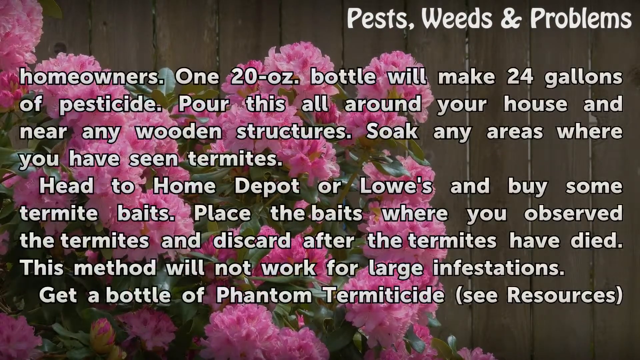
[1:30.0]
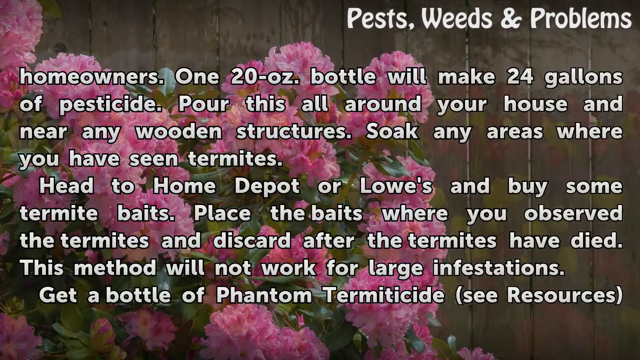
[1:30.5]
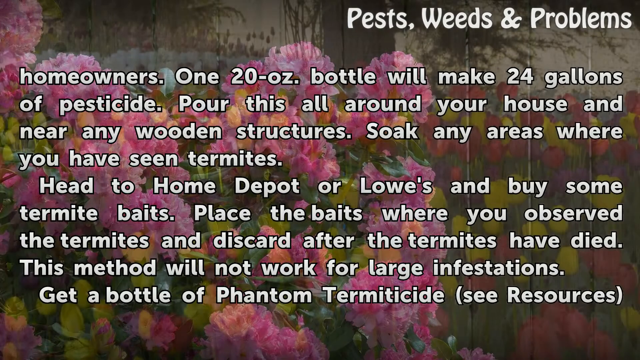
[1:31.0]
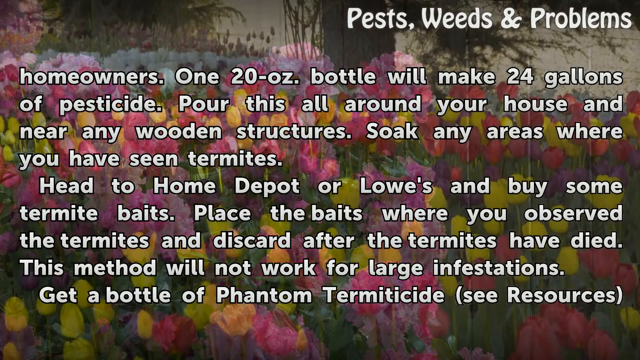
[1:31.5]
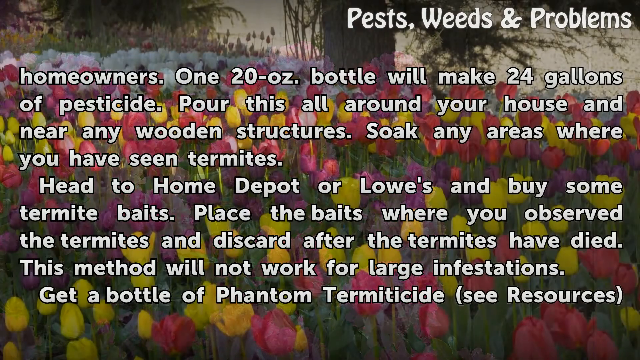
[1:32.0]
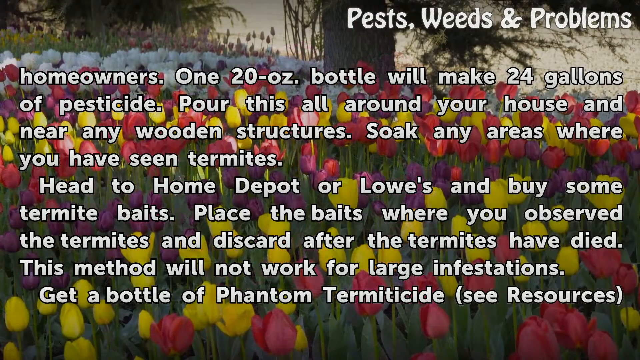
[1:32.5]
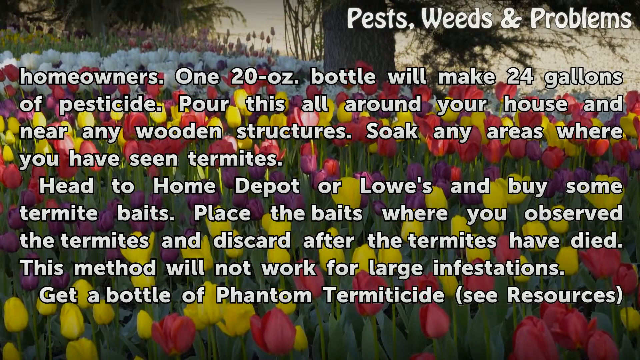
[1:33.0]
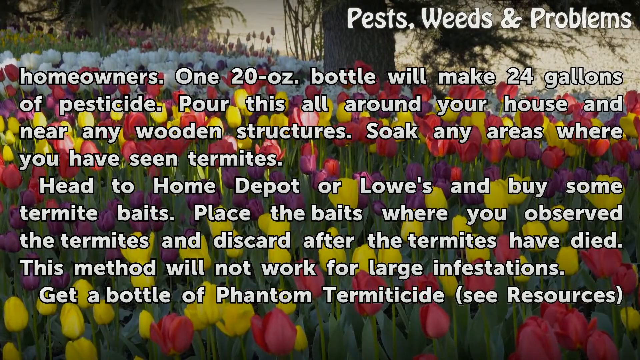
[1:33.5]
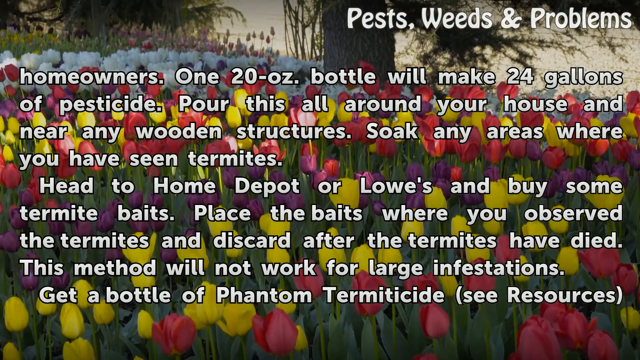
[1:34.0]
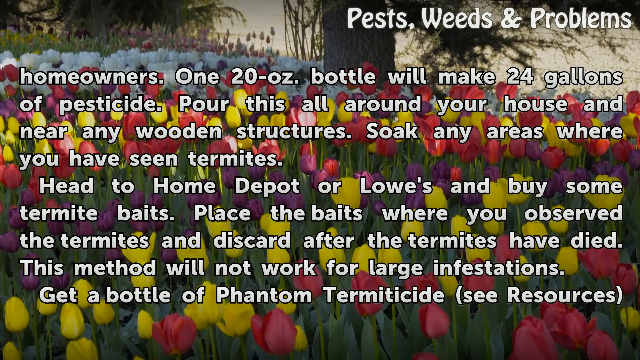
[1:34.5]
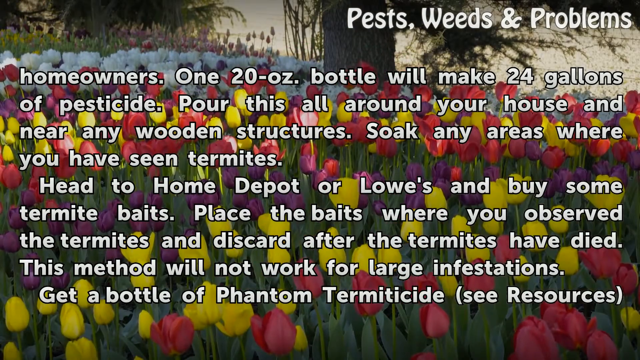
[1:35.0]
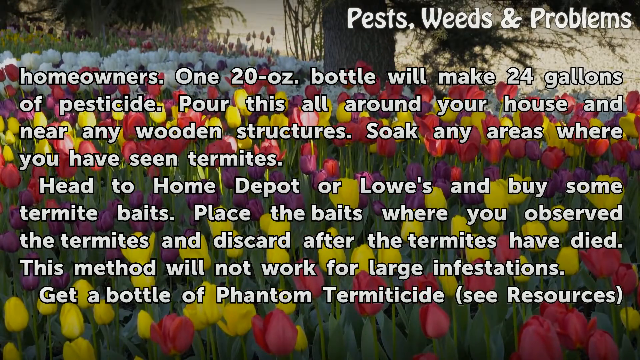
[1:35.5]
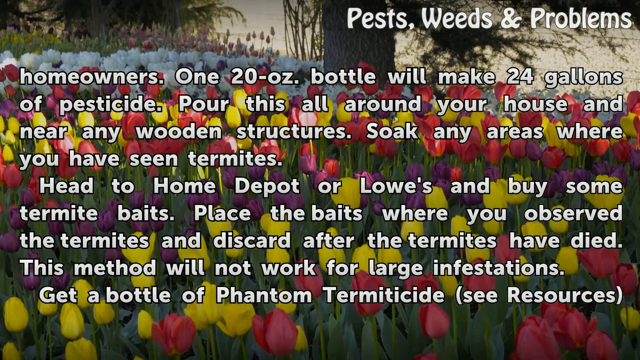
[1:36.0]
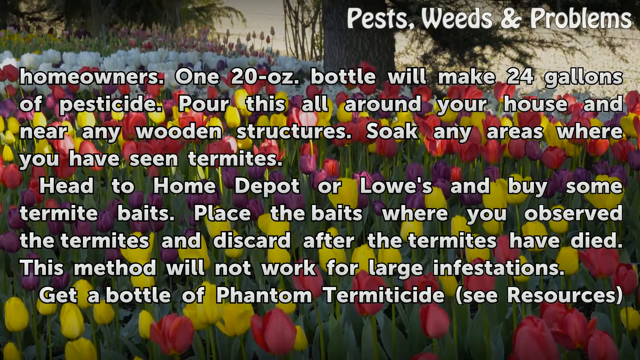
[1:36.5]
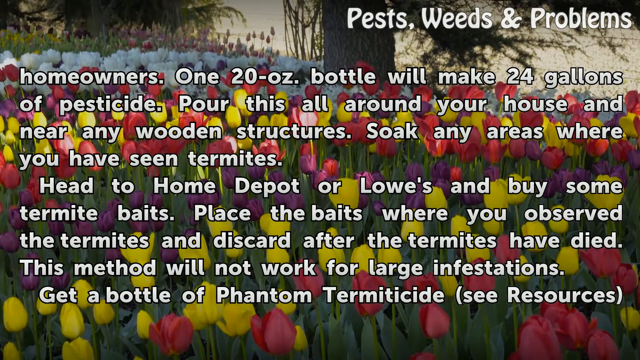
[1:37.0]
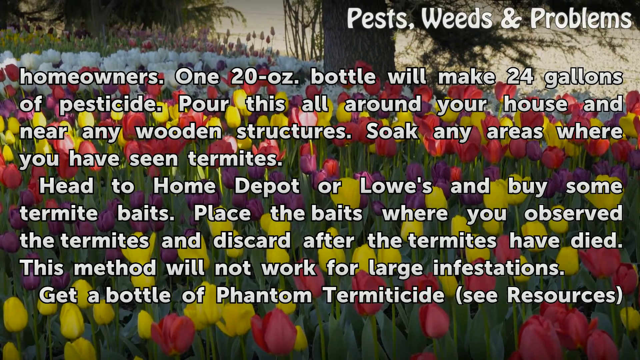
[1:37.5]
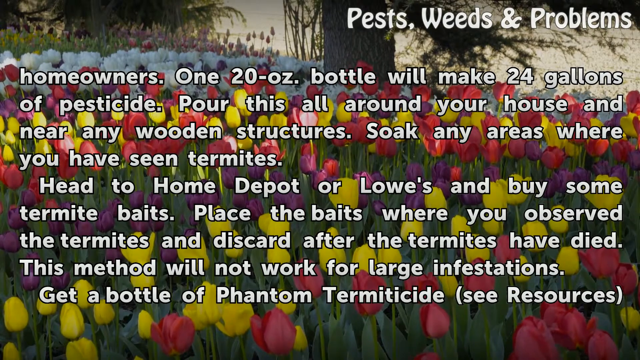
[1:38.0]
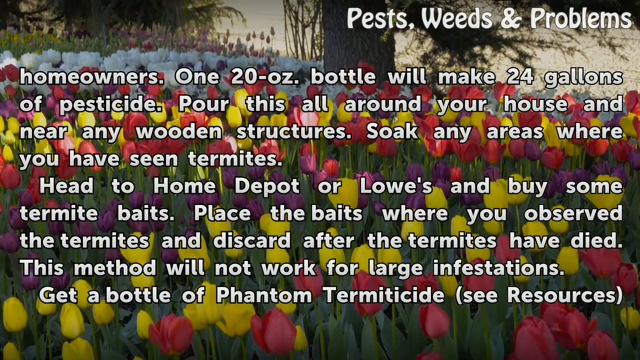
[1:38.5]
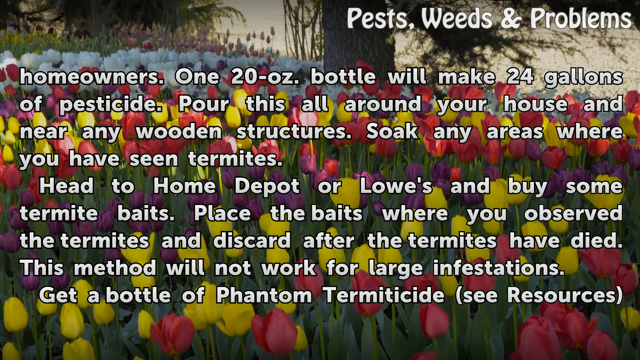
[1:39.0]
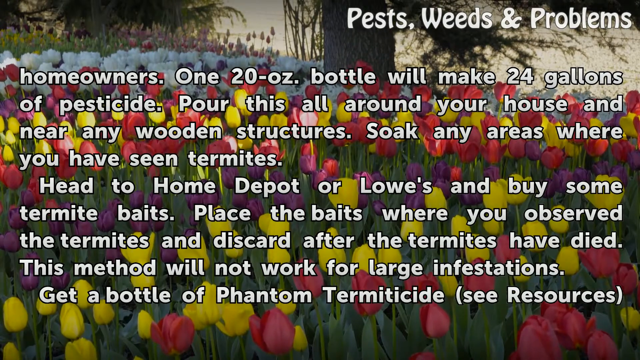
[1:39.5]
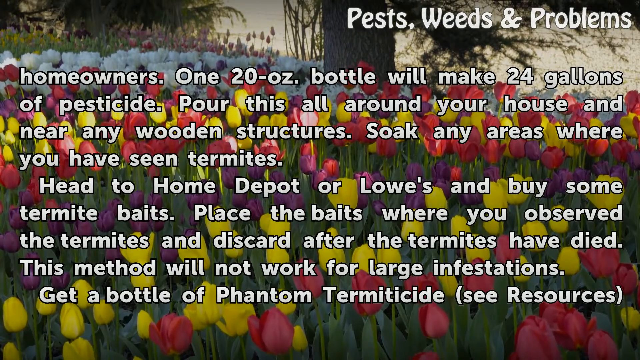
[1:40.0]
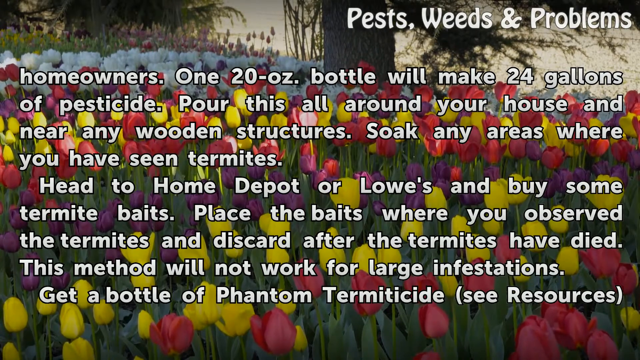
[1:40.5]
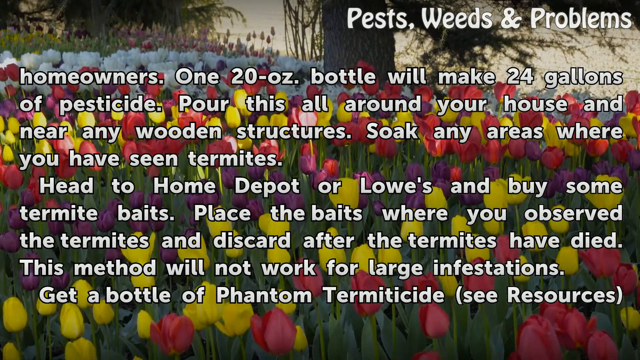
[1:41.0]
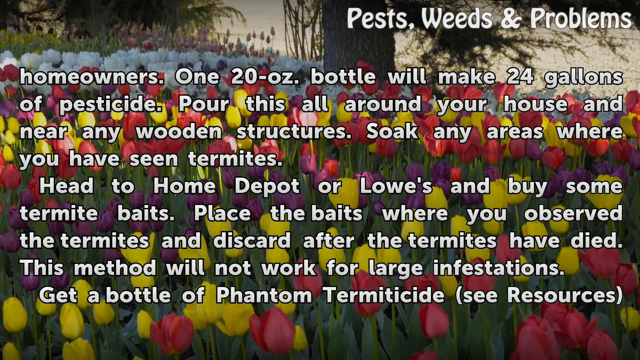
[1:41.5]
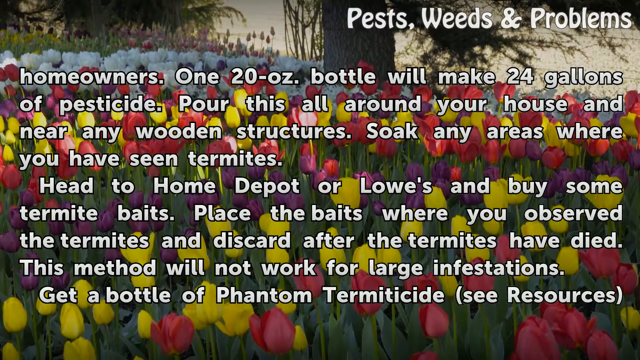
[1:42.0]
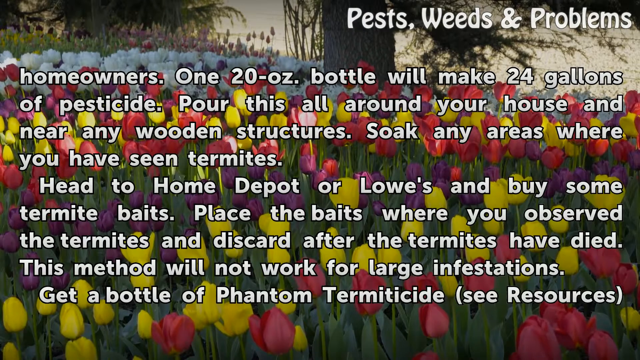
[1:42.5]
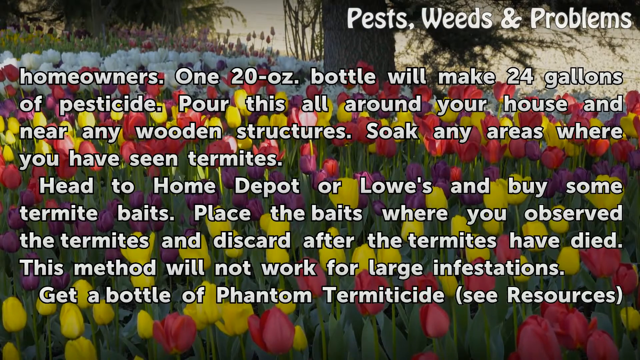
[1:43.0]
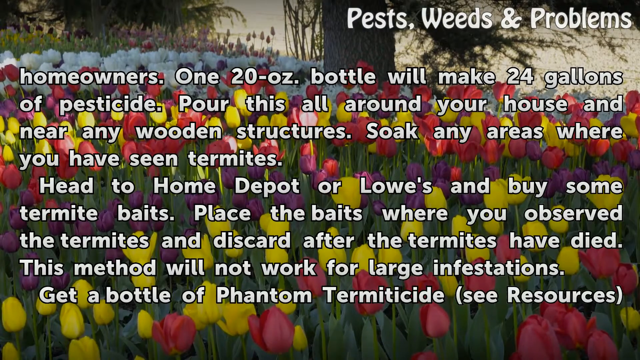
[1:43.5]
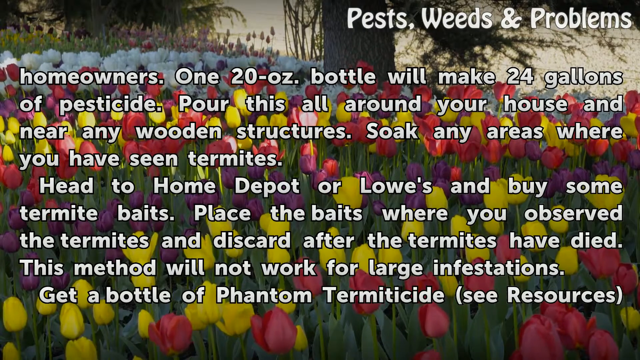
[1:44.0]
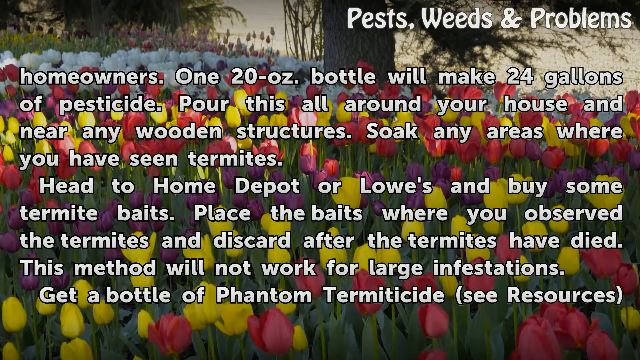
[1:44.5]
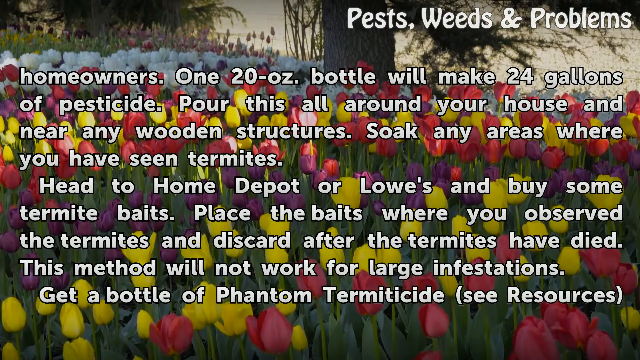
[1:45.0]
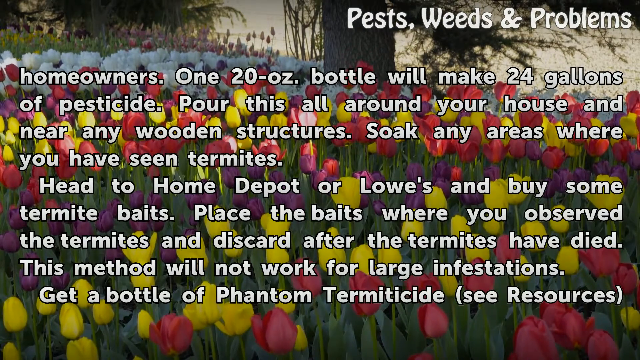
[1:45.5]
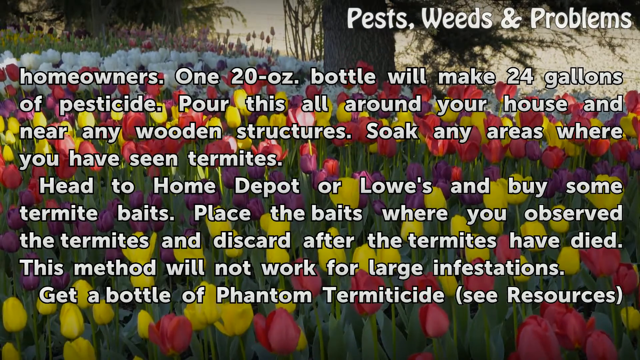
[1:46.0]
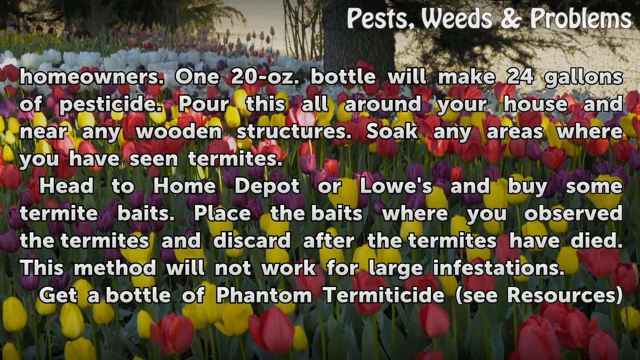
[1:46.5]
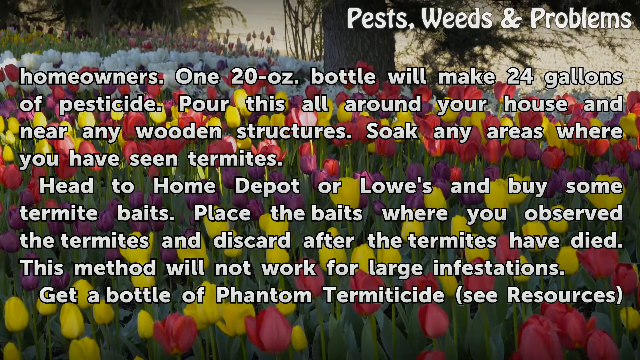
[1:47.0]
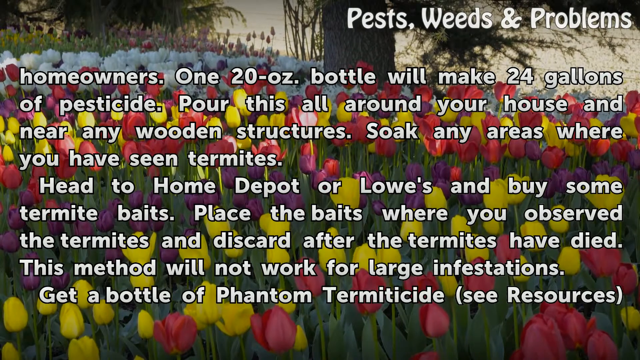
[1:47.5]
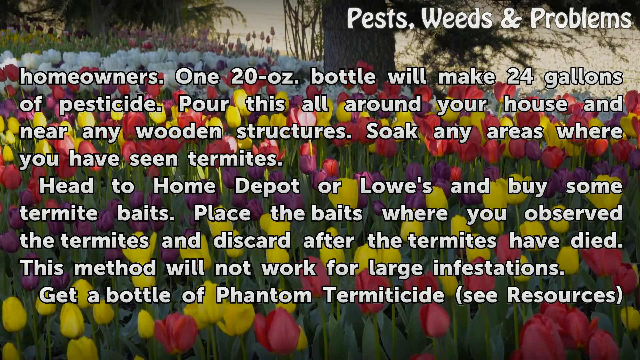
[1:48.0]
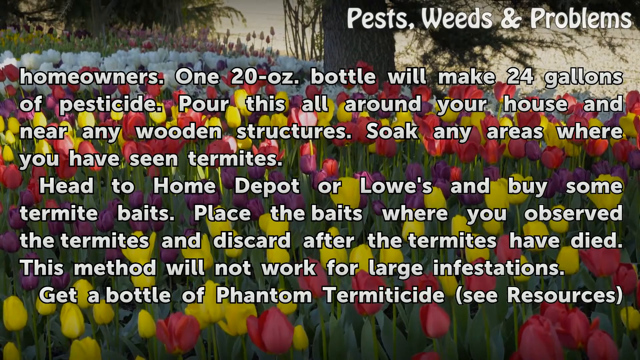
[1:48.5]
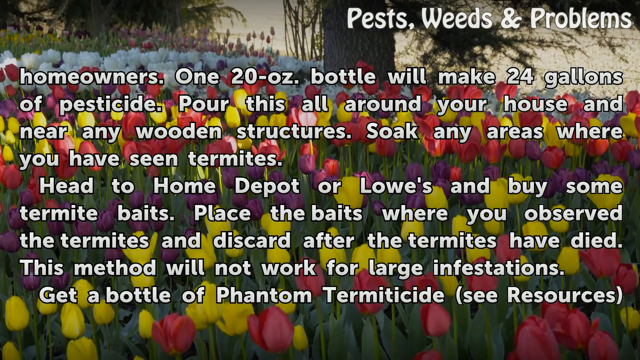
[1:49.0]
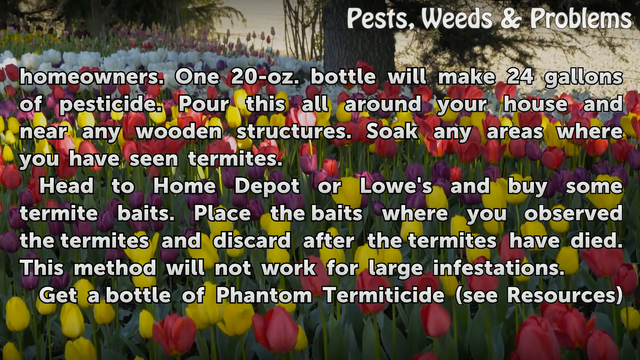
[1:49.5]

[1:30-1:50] The new page of text reads: "Homeowners, one 20 ounce bottle will make 24 gallons of pesticide. Pour this all around your house and near any wooden structures. Soak any areas where you have seen termites. Head to Home Depot or Lowe's and buy some termite baits. Place the baits where you observed the termites and discard after the termites have died. This method will not work for large infestations. Get a bottle of phantom termiticide." The background footage mixes through to a different shot: a field filled with hundreds of tulips in different coloured rows. At the front is a row of red tulips, then yellow, then purple, then red, yellow and purple again, and in the distance there are lots of white tulips. All the tulips are waving gently in the breeze.